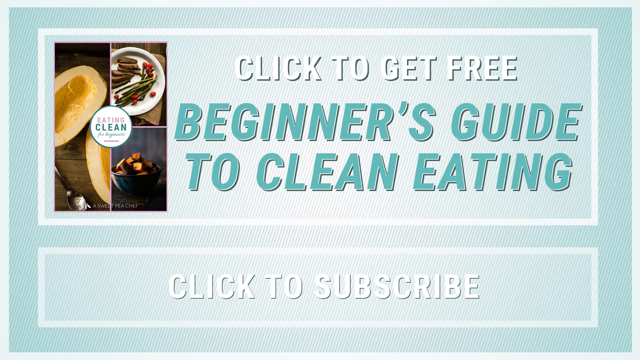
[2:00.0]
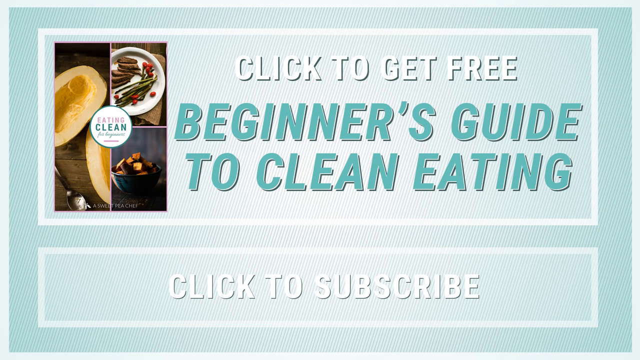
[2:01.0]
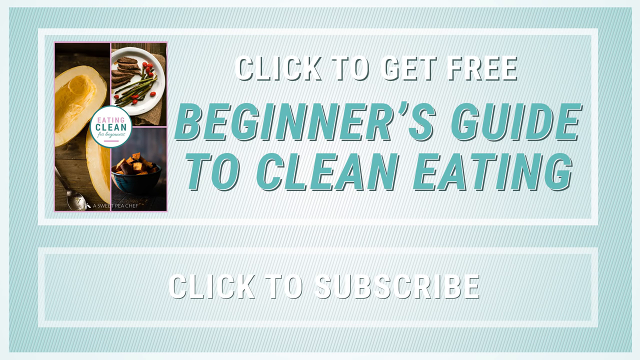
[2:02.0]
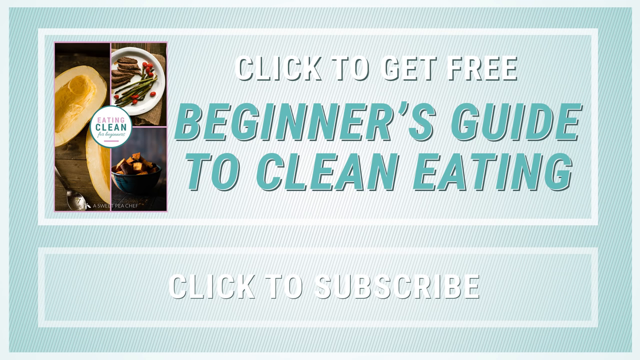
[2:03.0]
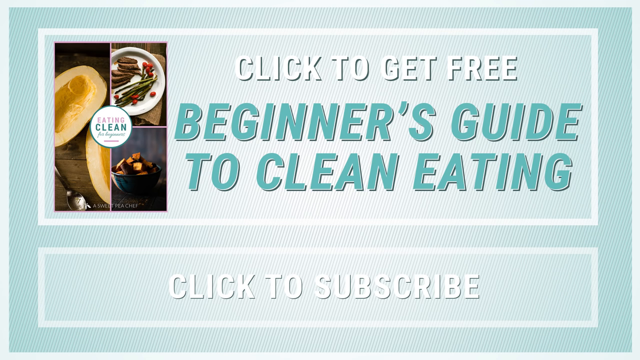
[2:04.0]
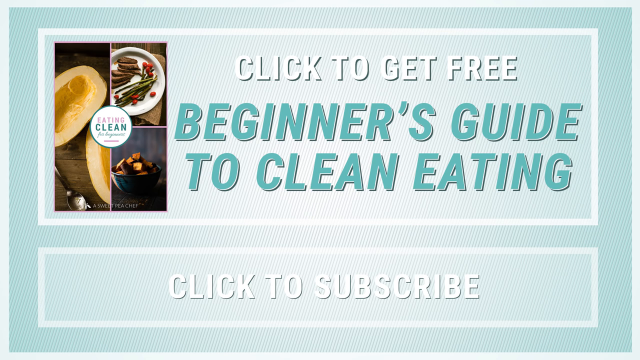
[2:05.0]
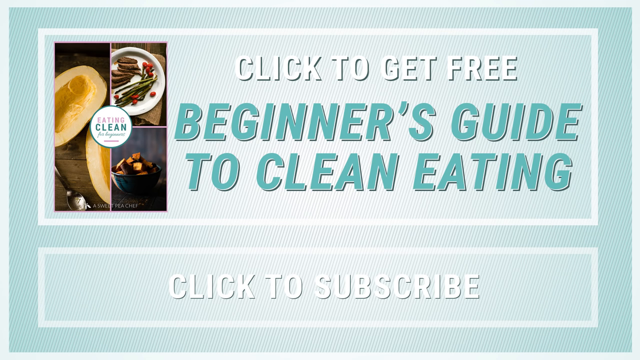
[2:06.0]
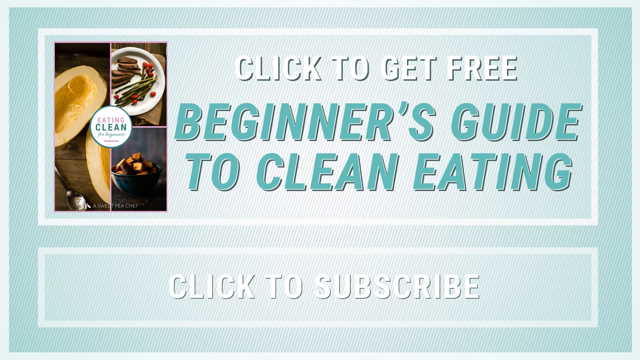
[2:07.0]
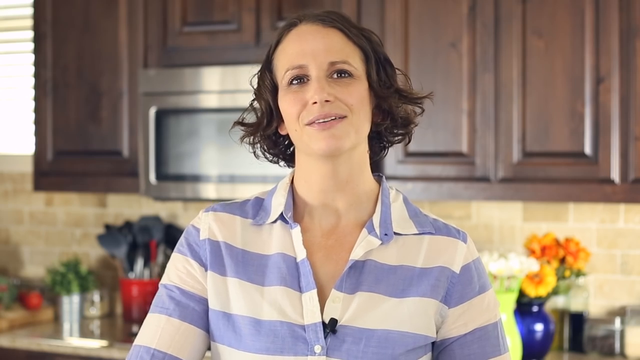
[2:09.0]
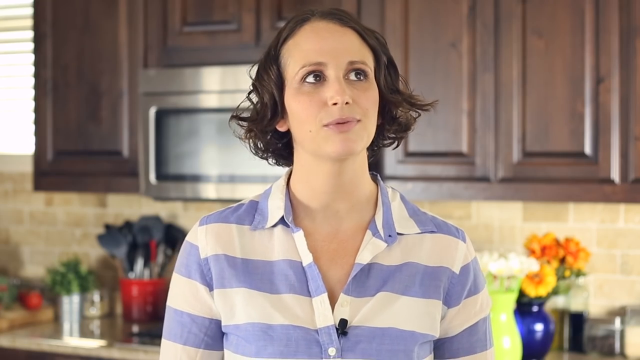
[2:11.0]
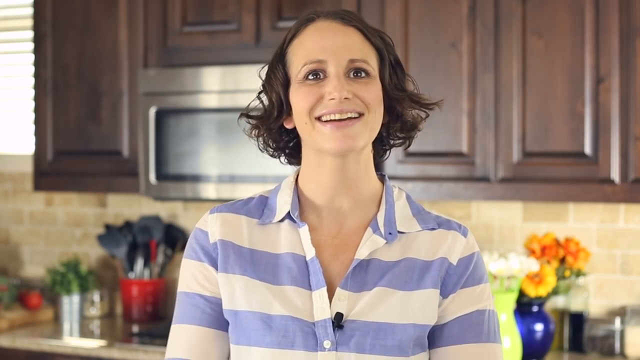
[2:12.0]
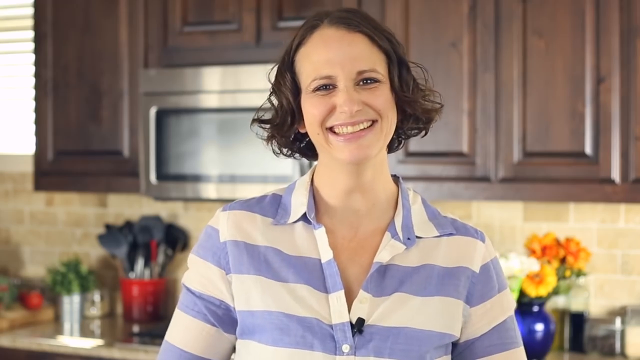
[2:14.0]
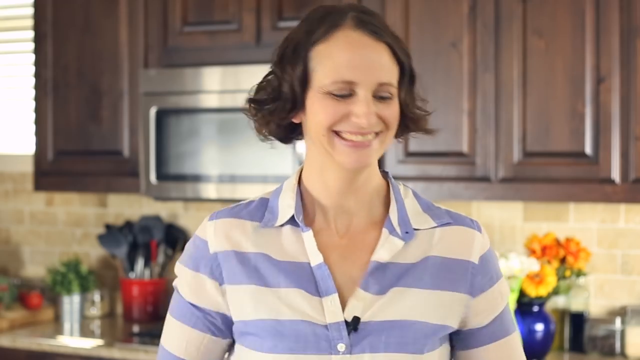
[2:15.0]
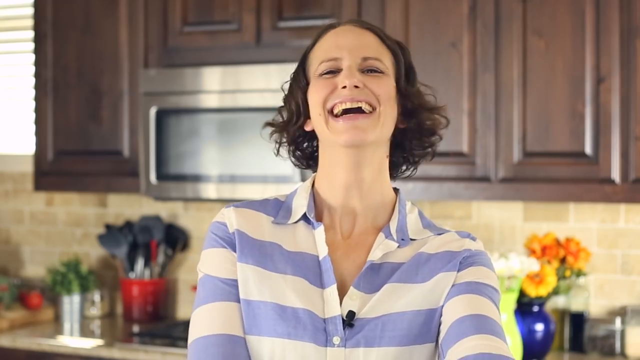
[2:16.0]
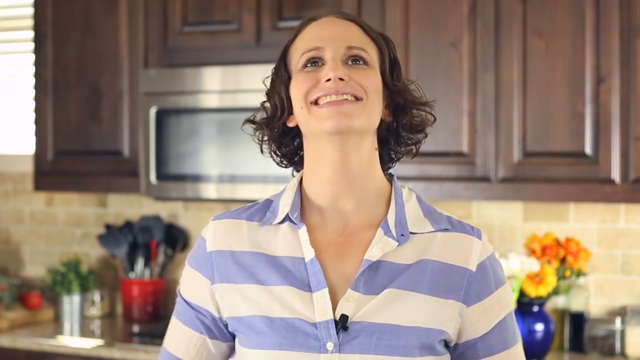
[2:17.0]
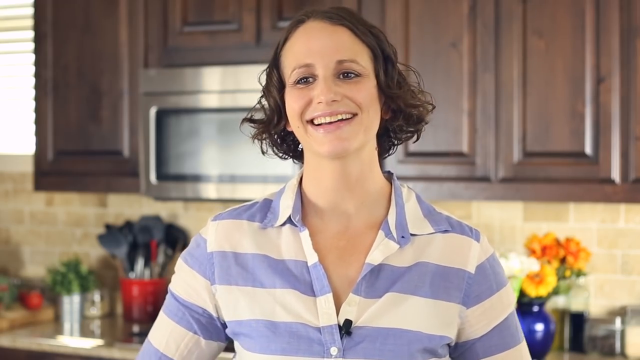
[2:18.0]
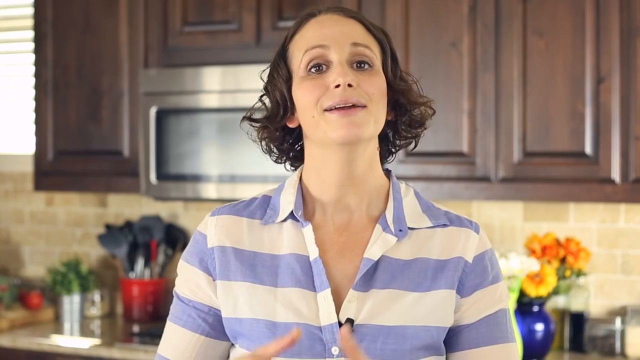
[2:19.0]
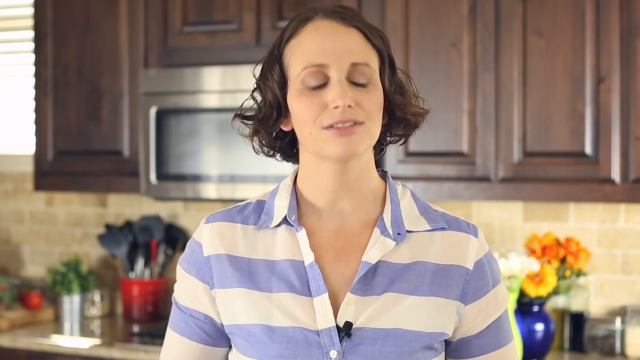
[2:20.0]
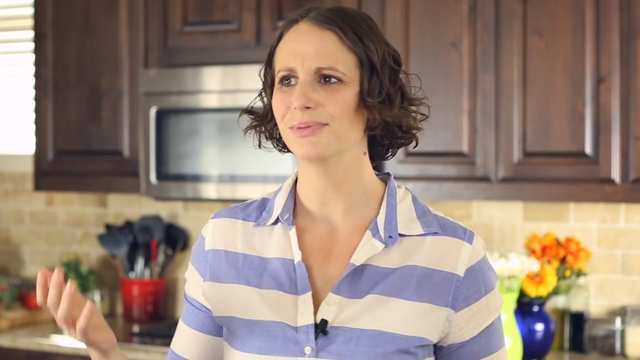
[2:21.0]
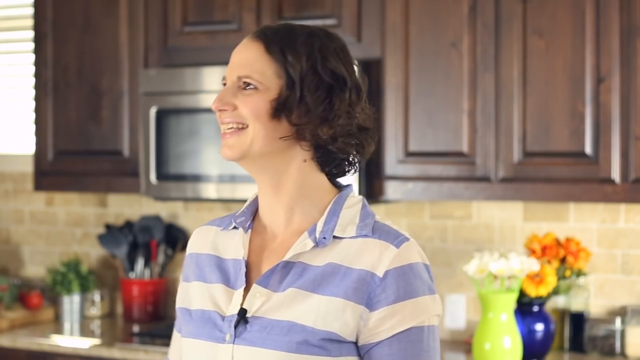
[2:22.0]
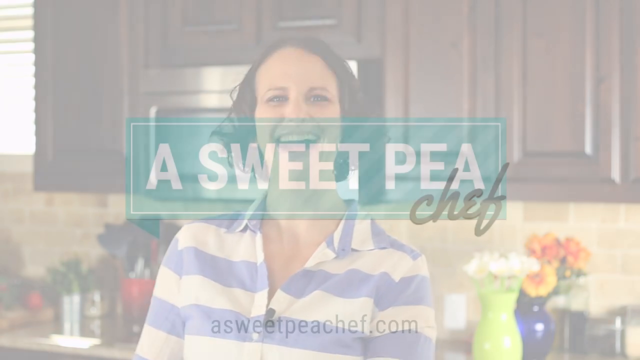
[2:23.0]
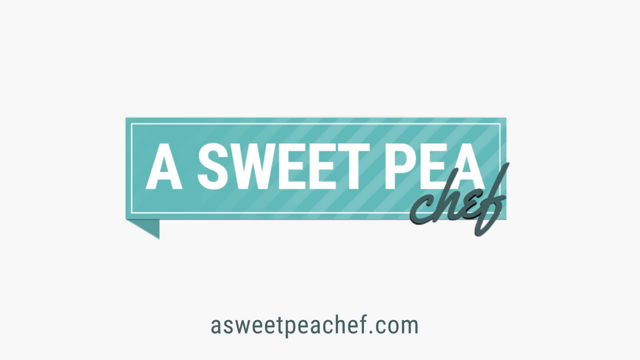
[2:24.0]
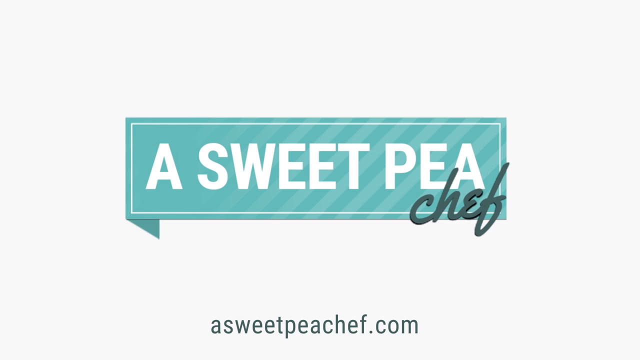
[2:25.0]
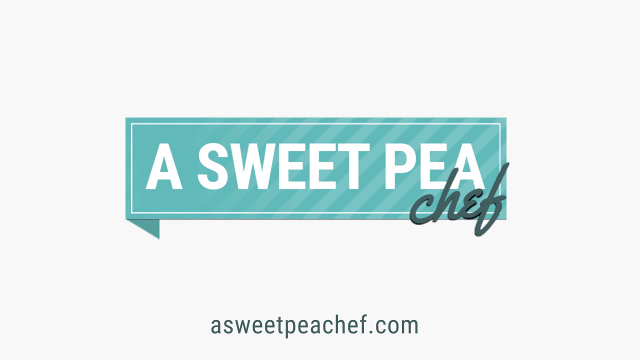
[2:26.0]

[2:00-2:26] A light blue background with kind of small line textures has a large white-outlined rectangular box across the top of the screen. On its left side there appears to be an image of a book titled "Eating Clean" with a collage of three images: on the left, a large image of a gourd cut in half; on the right, a small image of a plate with cut steak and asparagus, and beneath that an image of a blue bowl with some type of cubed brown vegetable. To the right, white text reads "click to get free," and beneath it larger teal text reads "Beginner's Guide to Clean Eating." Below that box, toward the bottom of the screen, a small, long white-outlined rectangular box contains white text reading "click to subscribe." The screen changes to a woman wearing a shirt with thick horizontal stripes alternating white and light purple, with a collar and a V-neck and a little microphone at the bottom of the collar. She has short light-dark brown hair that kind of falls below her ears and is curly at the end. She stands in a home kitchen with brown cabinets behind her, a silver microwave and a light cream-colored brick backsplash. She talks to the camera and starts laughing, the screen flashes white, and she returns, kind of looking off to the side, then back at the camera, and breaks out laughing again. The screen flashes white again, and she is laughing and waving her hands around, kind of flustered. It seems to be a series of bloopers of her messing up lines and laughing, separated by white flashes. The screen then changes to the ending screen on a white background. In the middle is a teal rectangular box with "A SWEET PEA" in large white capital letters, and beneath the word "PEA" is "chef" in darker bluish-green lowercase cursive letters. Small black text at the bottom of the screen reads "asweetpeachef.com/".